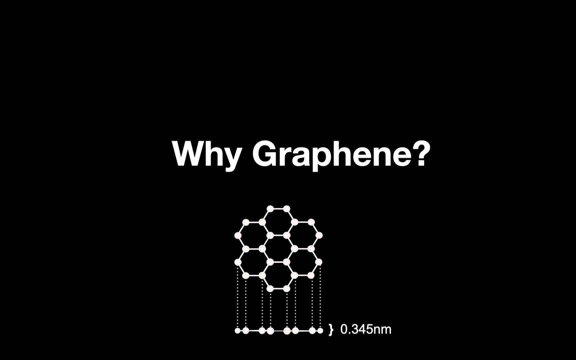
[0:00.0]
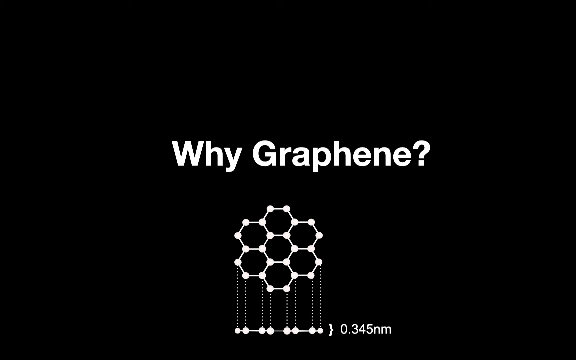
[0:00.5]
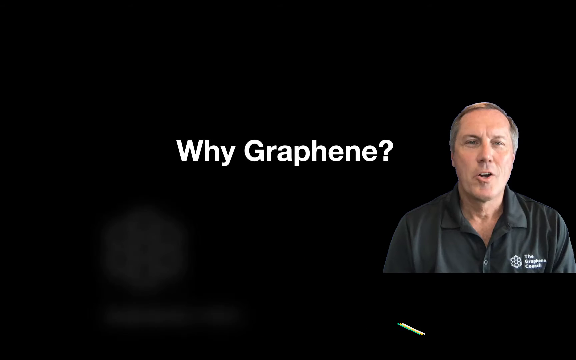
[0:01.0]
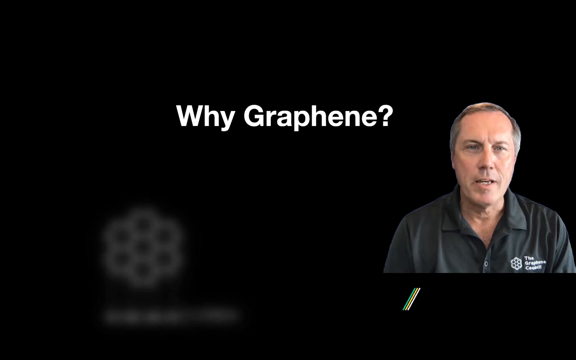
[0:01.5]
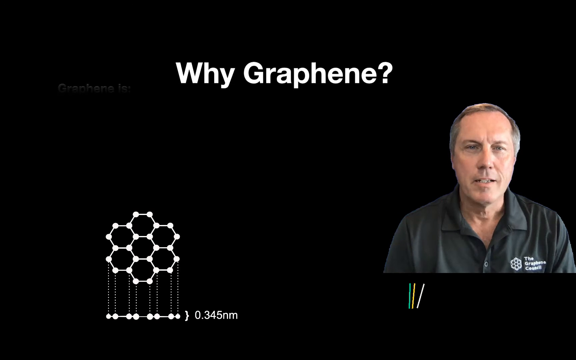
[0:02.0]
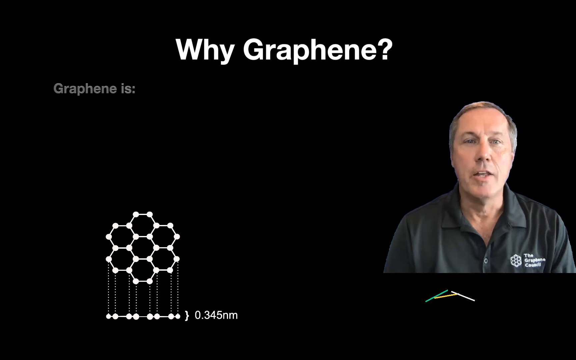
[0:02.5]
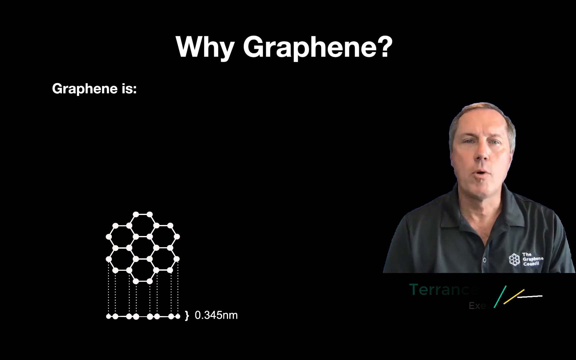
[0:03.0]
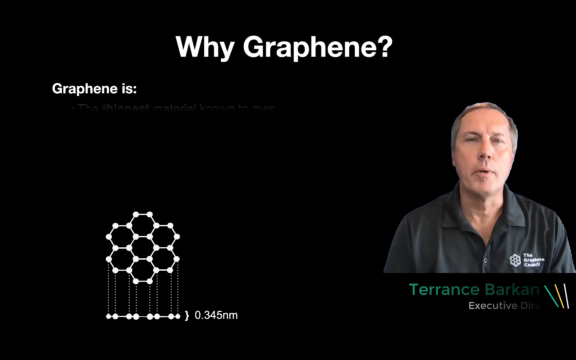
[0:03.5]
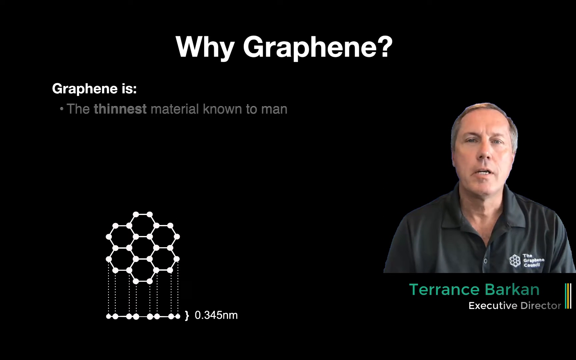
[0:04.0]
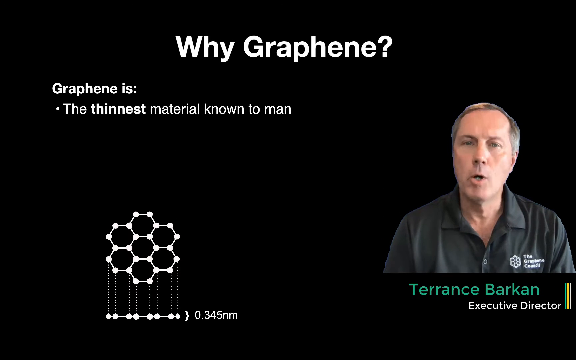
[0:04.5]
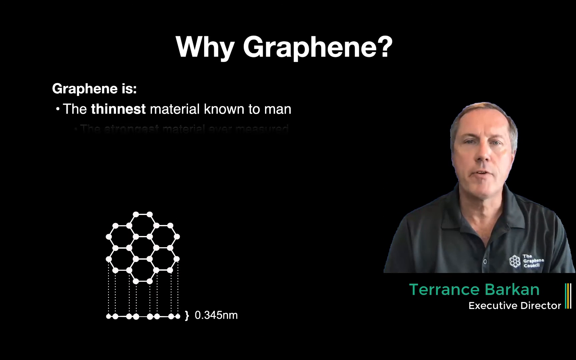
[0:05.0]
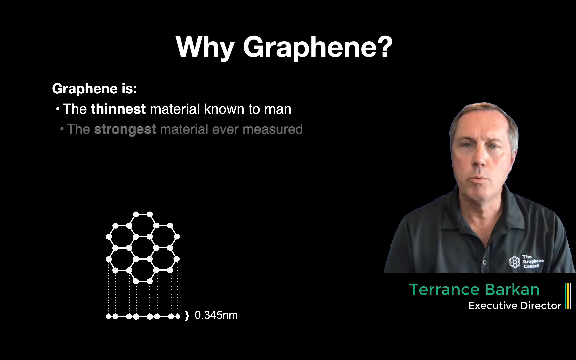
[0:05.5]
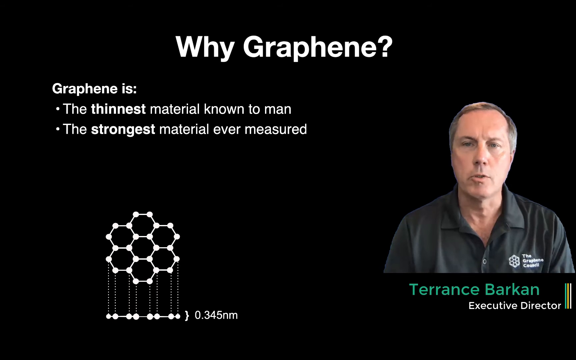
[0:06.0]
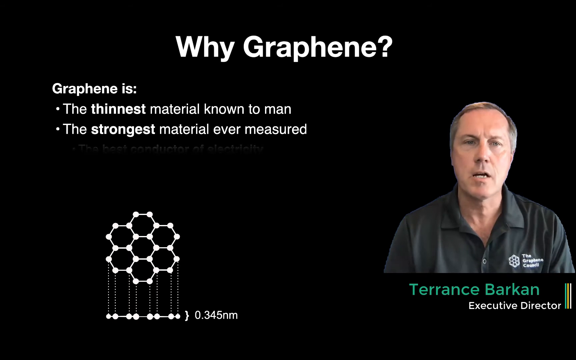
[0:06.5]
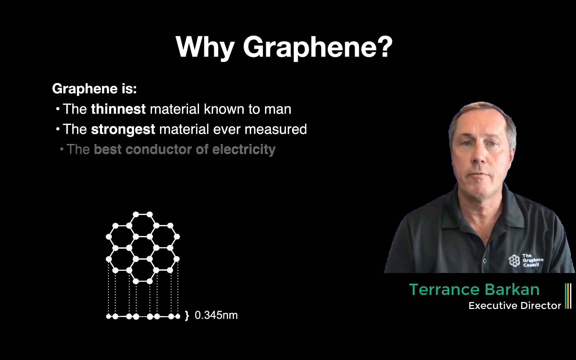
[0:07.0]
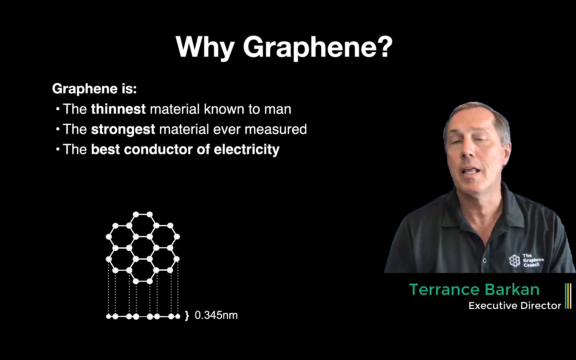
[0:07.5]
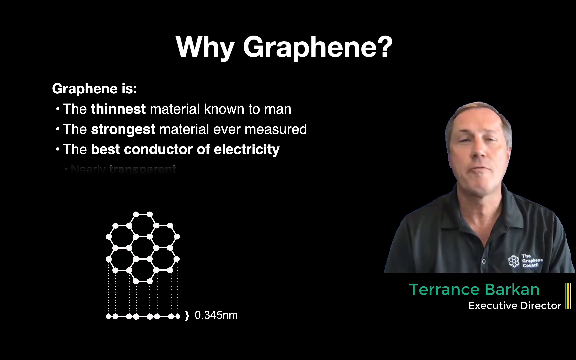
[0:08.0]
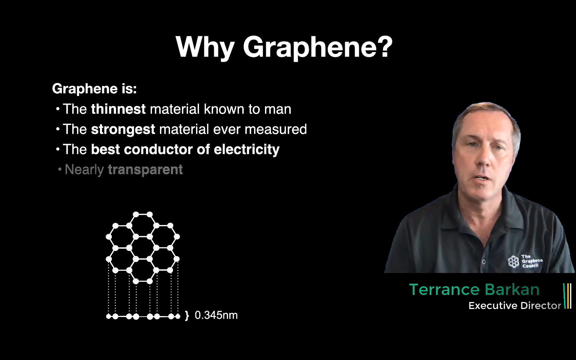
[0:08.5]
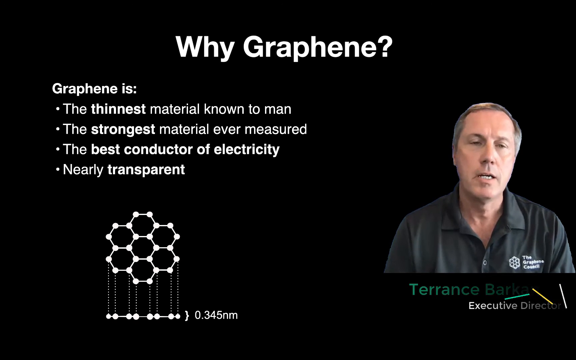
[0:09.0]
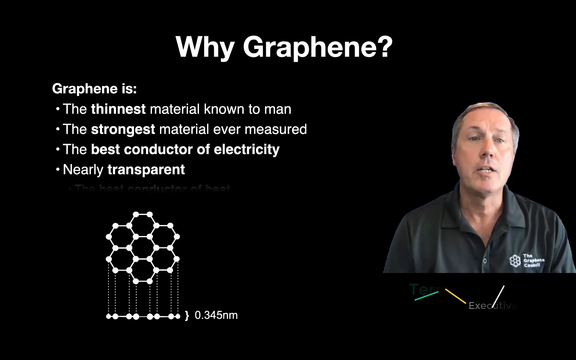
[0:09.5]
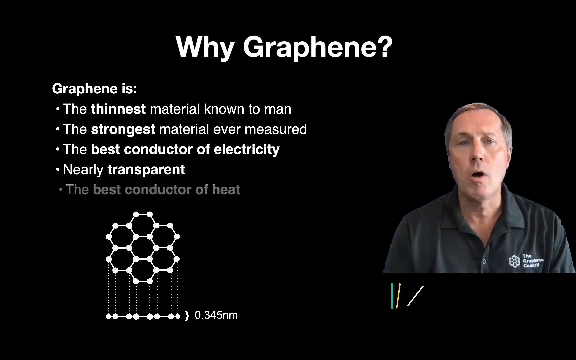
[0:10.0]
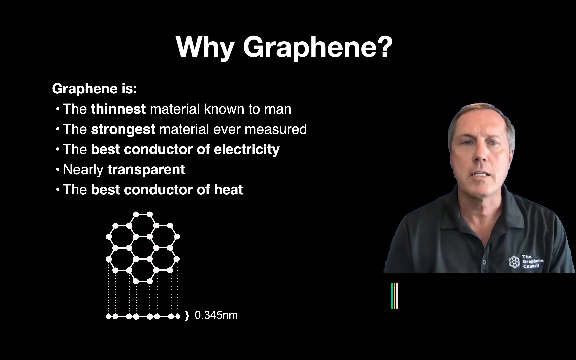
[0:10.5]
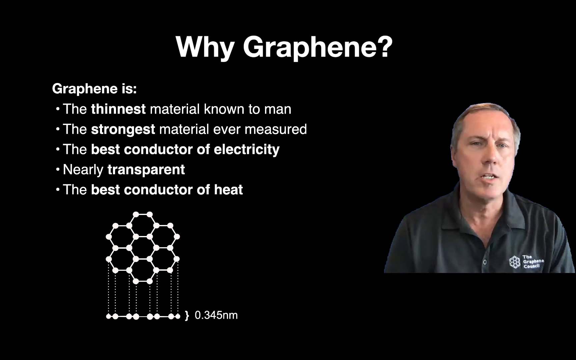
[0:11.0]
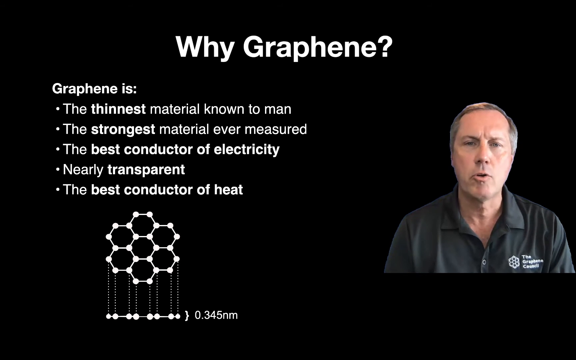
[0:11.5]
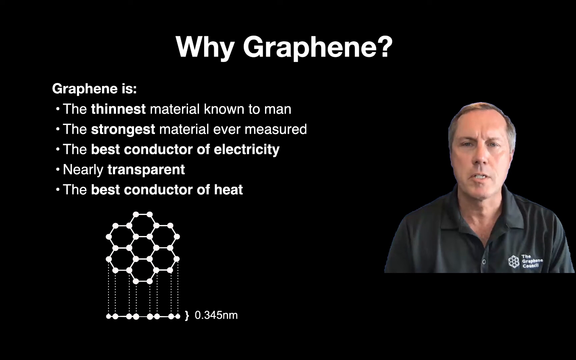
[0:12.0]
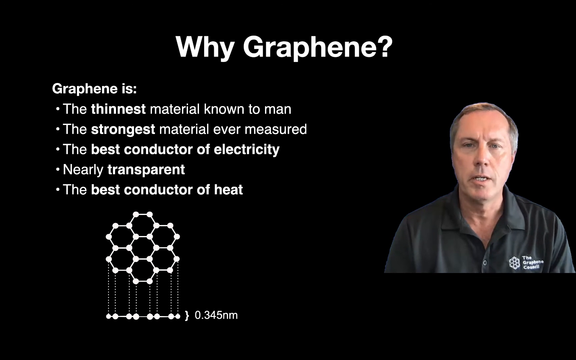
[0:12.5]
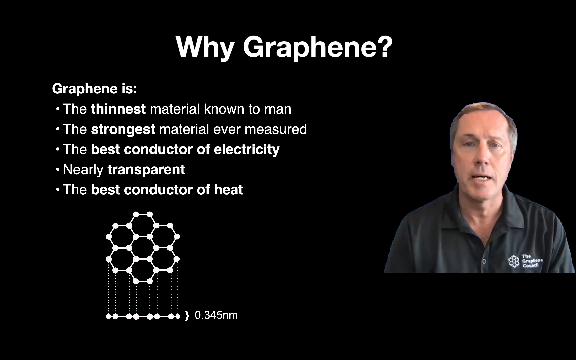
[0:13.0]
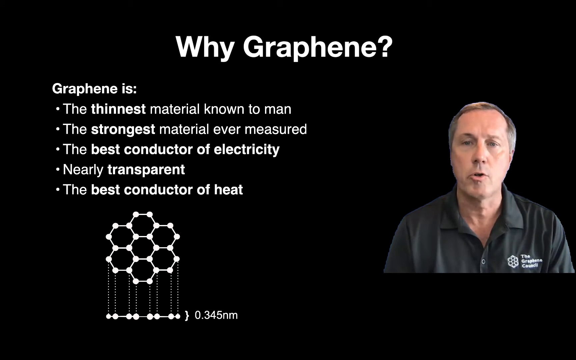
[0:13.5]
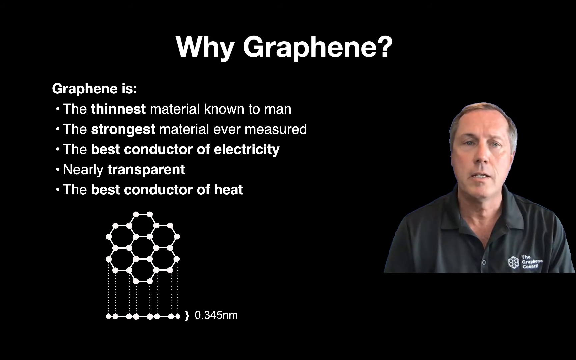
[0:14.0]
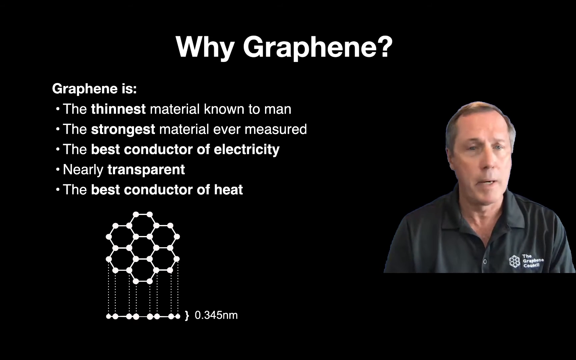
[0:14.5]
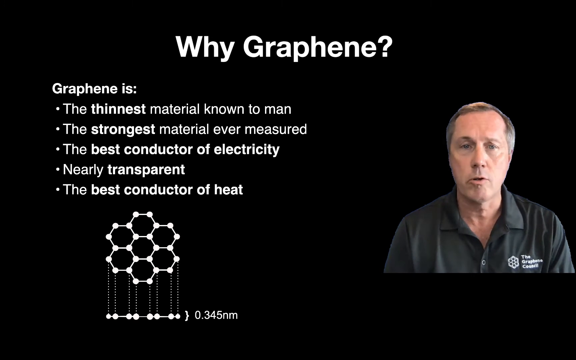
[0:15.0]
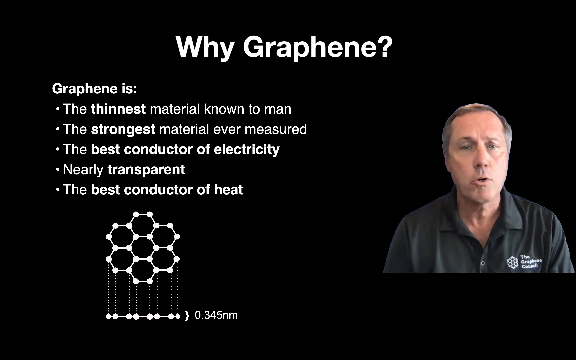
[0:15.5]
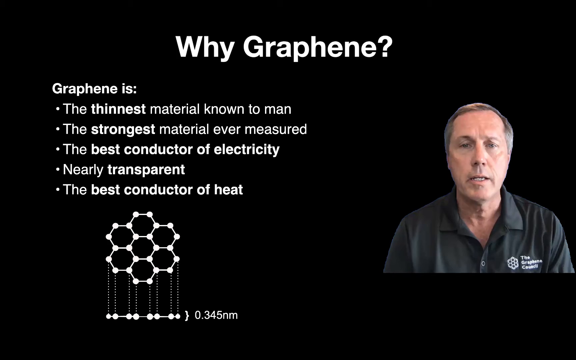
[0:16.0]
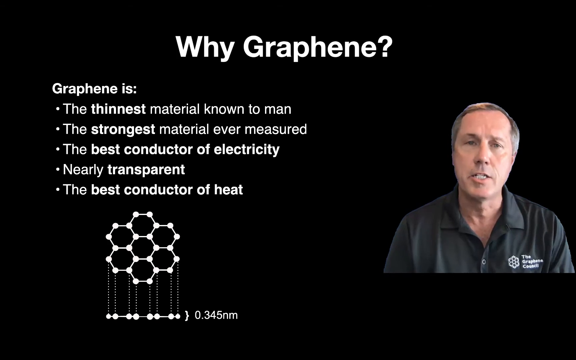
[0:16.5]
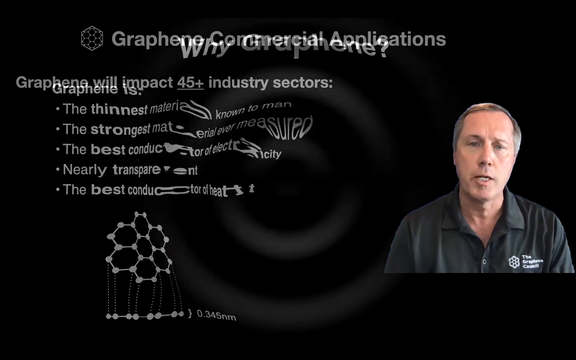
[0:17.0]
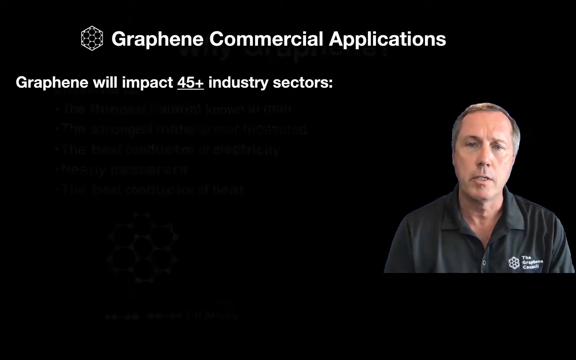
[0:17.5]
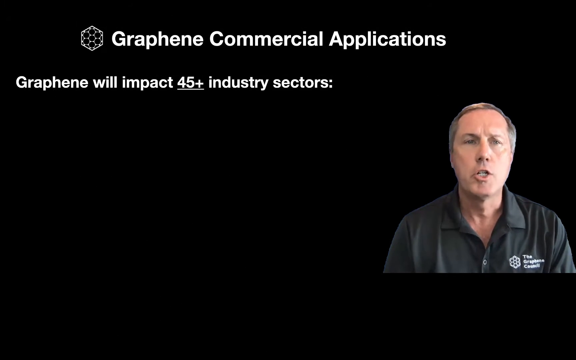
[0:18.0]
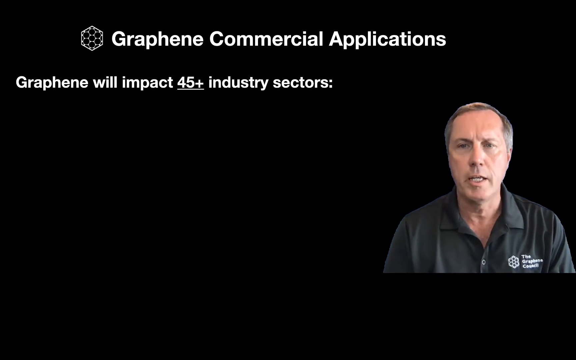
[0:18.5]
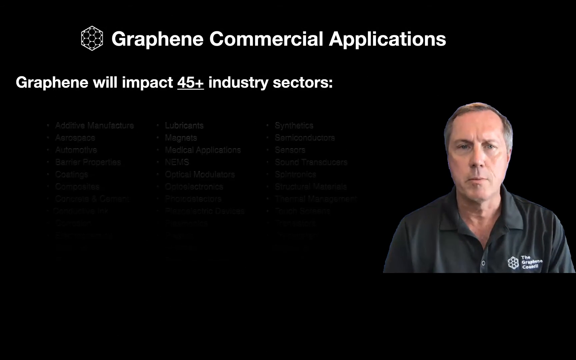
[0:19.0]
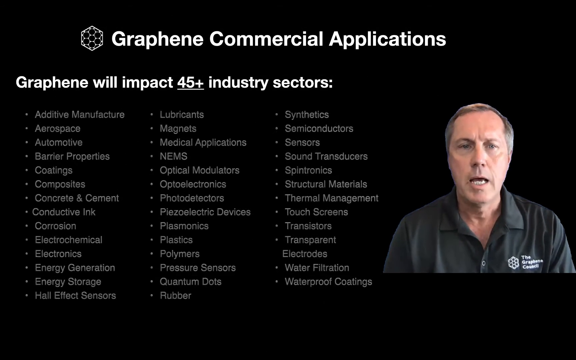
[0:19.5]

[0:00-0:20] A slideshow-style presentation opens on a black background with the white text "why graphene" and a segment of about seven interlocking hexagonal shapes beneath the text. A man appears in a small video thumbnail on the right side as the text slides up. He looks to be maybe in his 50s or 60s and has an emblem on the left side of his chest. The slide then lists what graphene is in bullet points: "the thinnest material known to man," "the strongest material ever measured," "the best conductor" of electricity, and "nearly transparent." The graphics come in quickly, and beneath them what look like colored sticks come together to form a vertical line. The man keeps speaking throughout. The image then seems to puddle slightly before moving to "commercial applications," with the text "graphene will impact 45 plus industries"; a list of industries flashes for a second and disappears. The man looks somewhat enthusiastic and raises an eyebrow as he speaks.